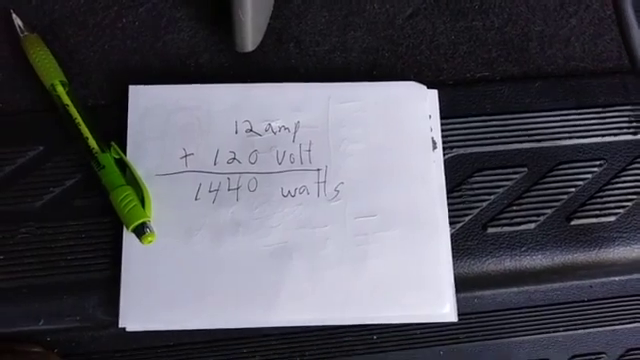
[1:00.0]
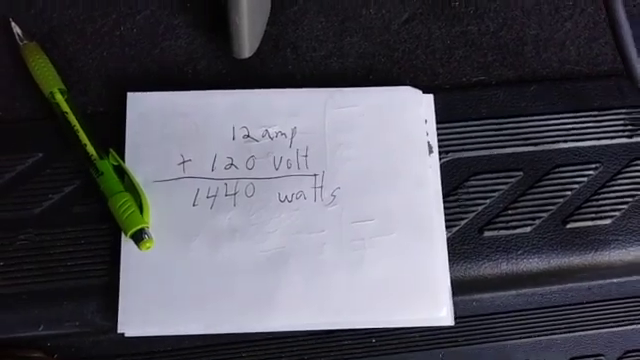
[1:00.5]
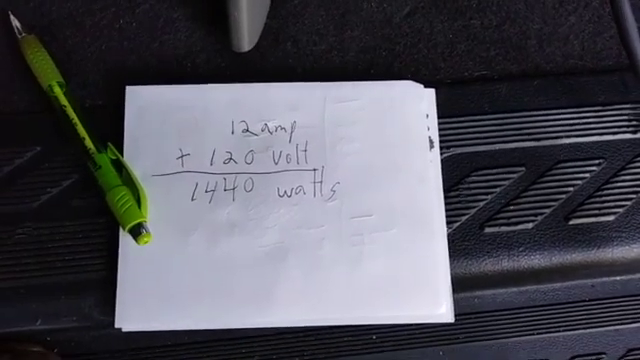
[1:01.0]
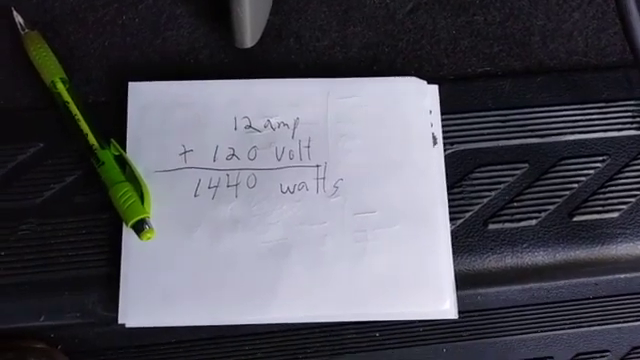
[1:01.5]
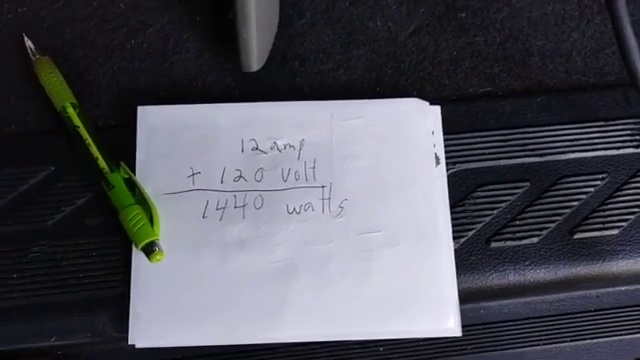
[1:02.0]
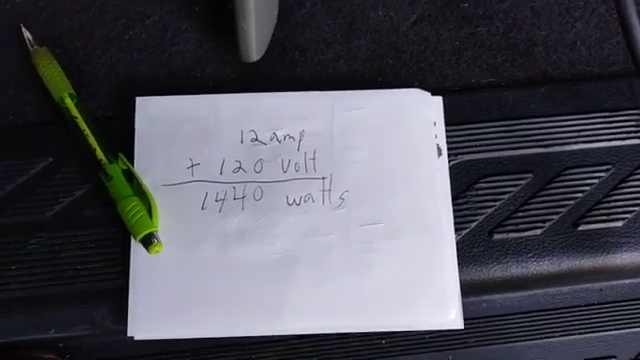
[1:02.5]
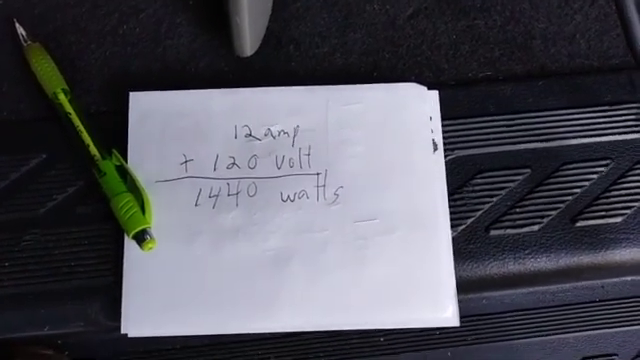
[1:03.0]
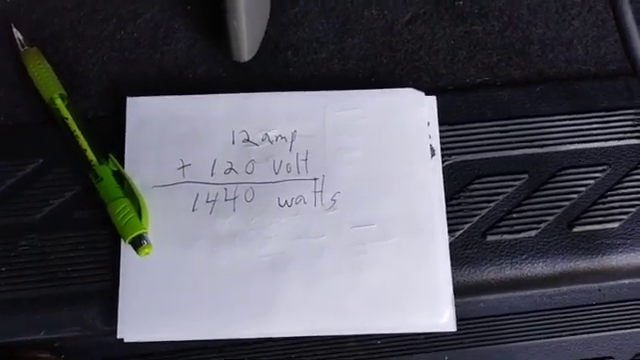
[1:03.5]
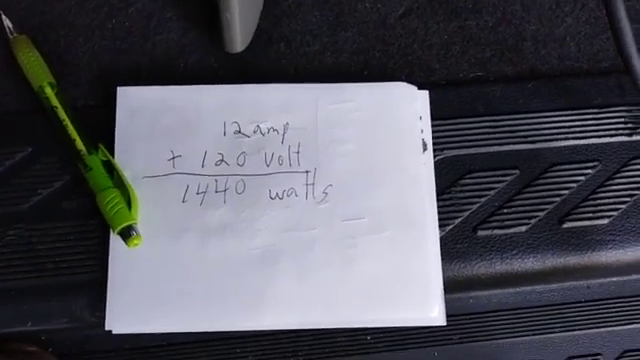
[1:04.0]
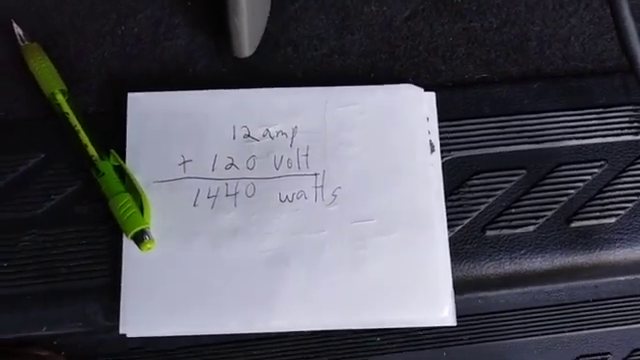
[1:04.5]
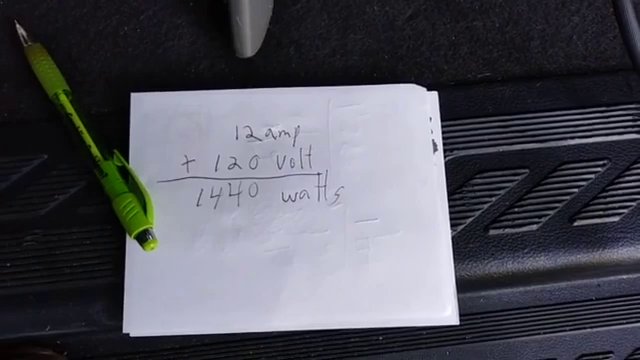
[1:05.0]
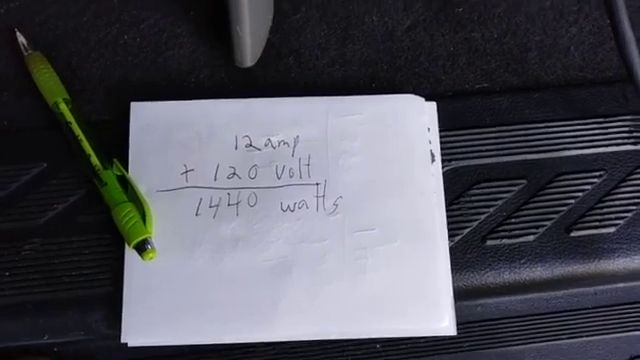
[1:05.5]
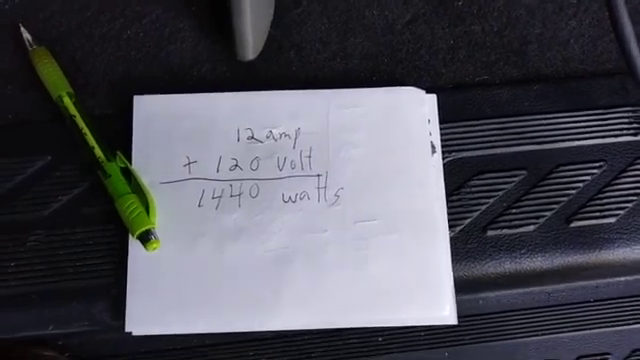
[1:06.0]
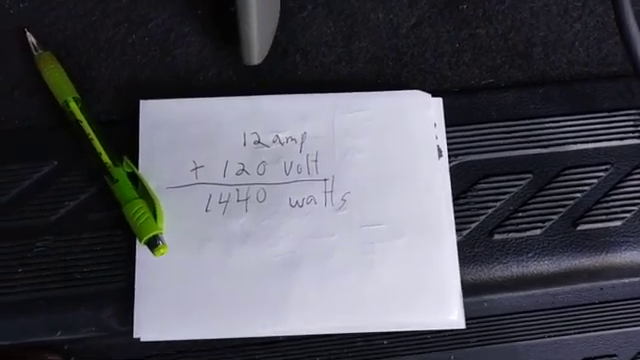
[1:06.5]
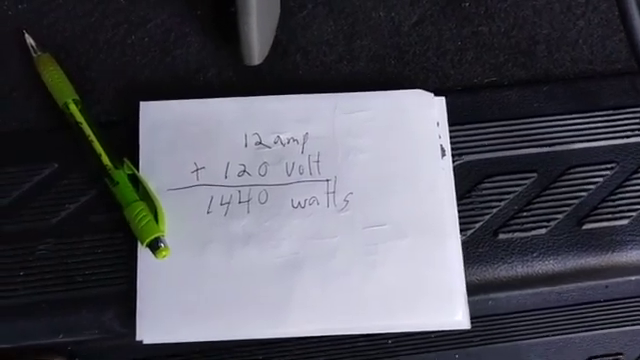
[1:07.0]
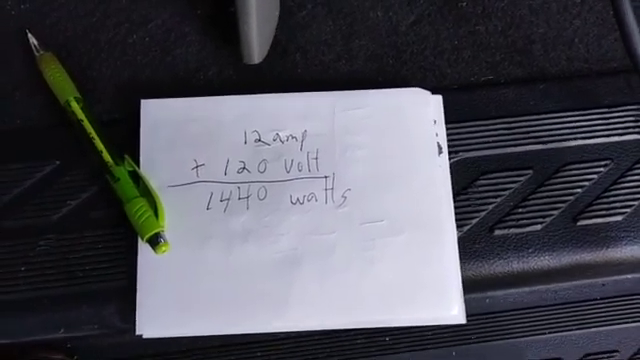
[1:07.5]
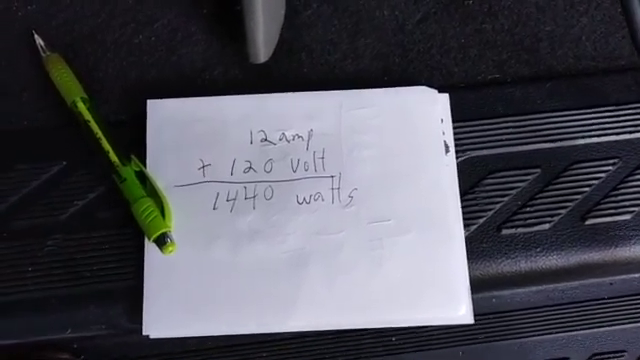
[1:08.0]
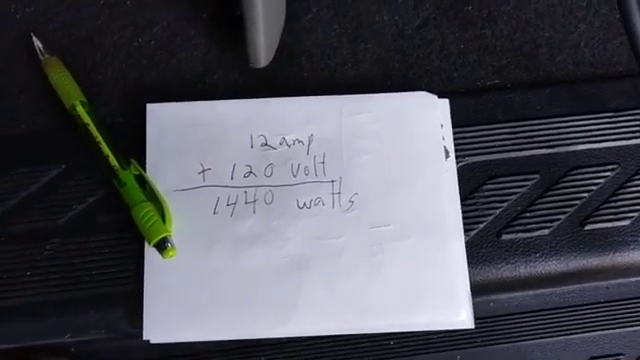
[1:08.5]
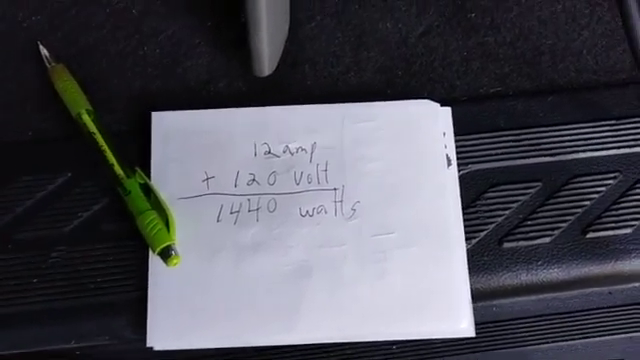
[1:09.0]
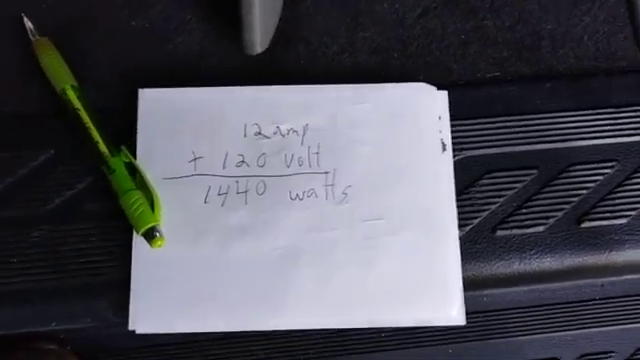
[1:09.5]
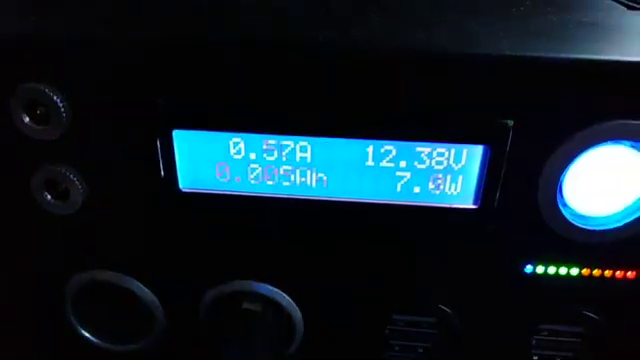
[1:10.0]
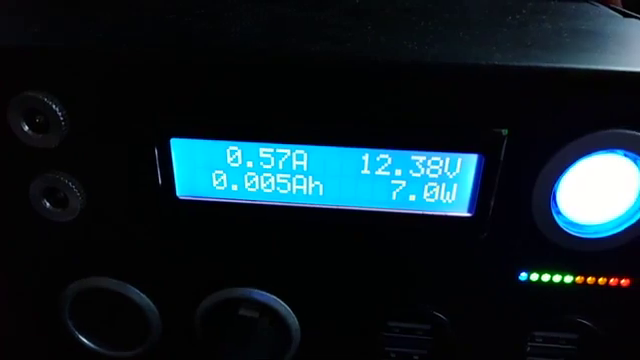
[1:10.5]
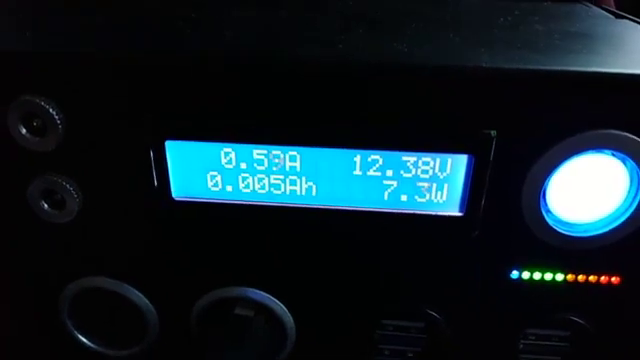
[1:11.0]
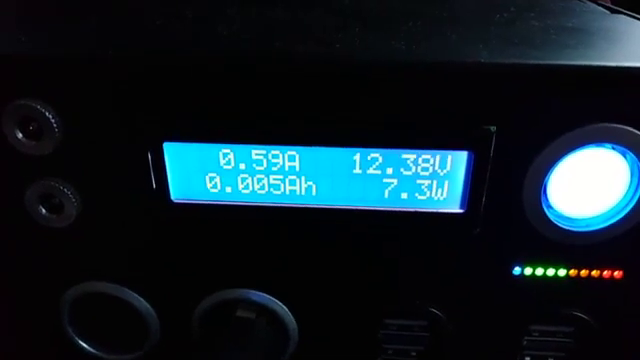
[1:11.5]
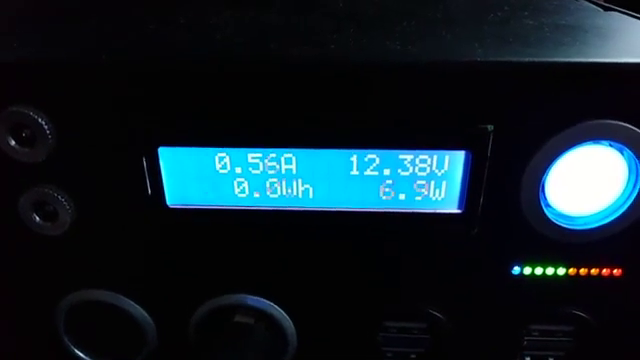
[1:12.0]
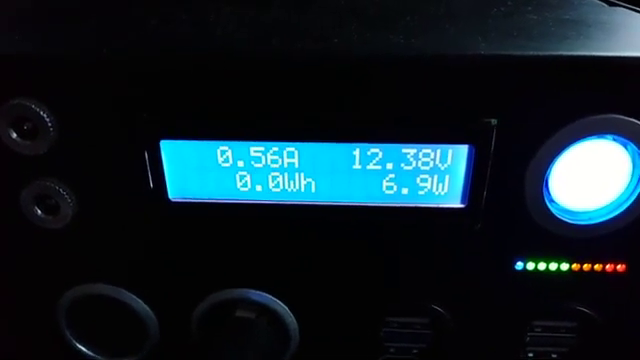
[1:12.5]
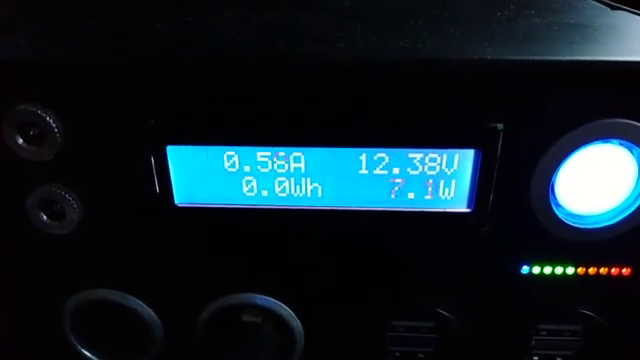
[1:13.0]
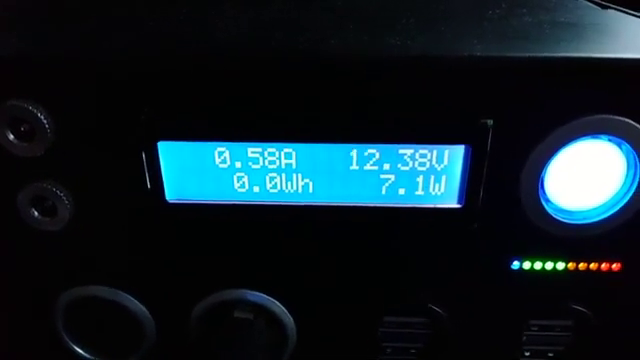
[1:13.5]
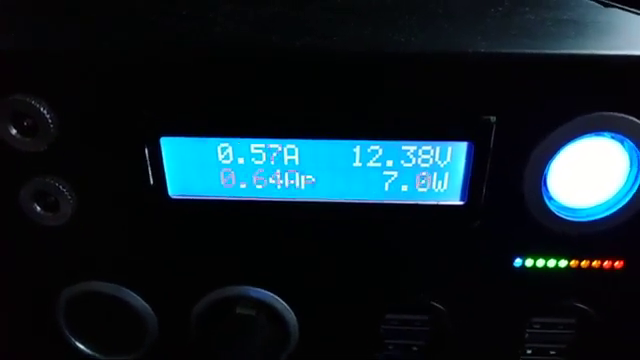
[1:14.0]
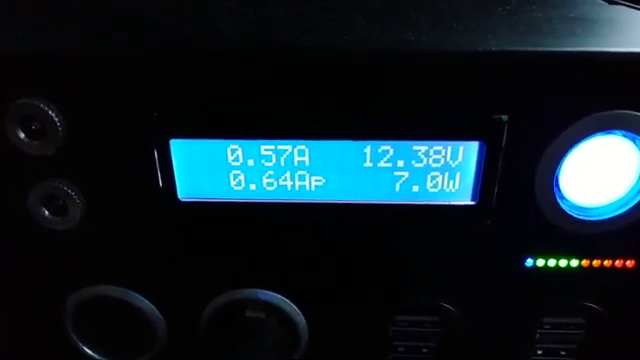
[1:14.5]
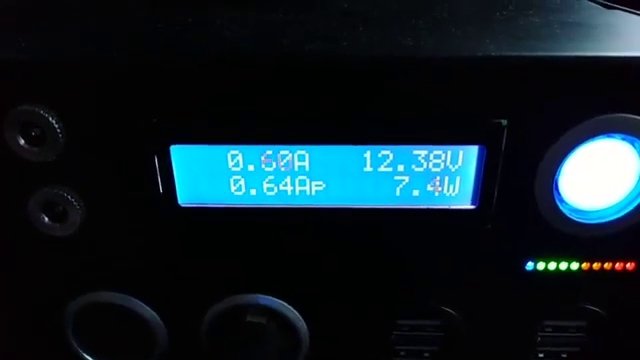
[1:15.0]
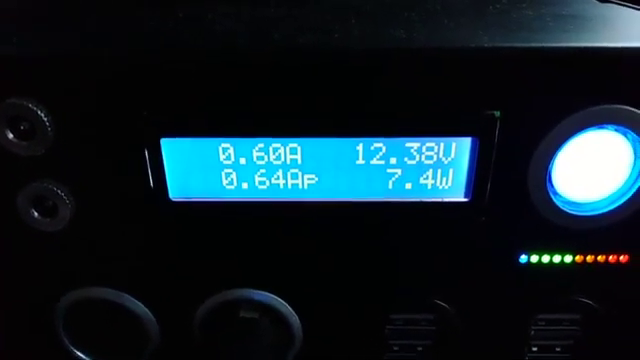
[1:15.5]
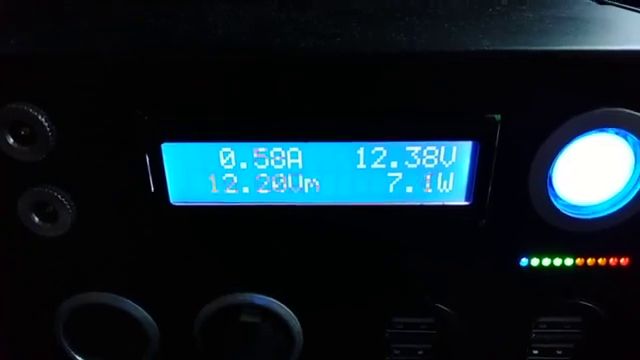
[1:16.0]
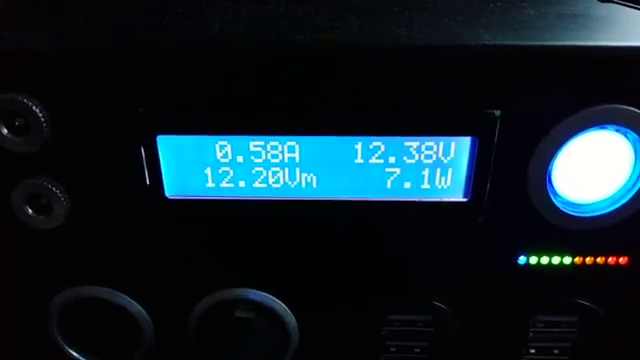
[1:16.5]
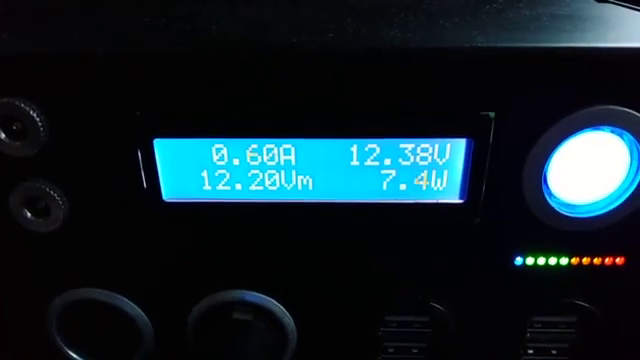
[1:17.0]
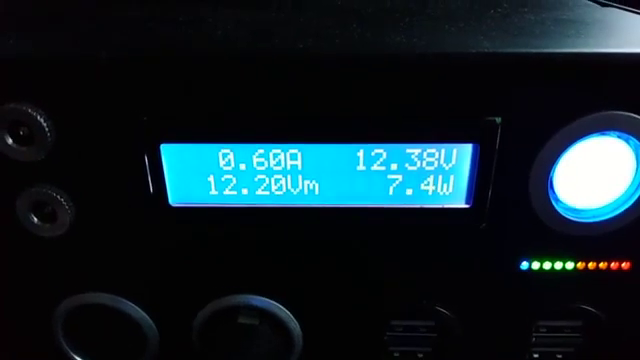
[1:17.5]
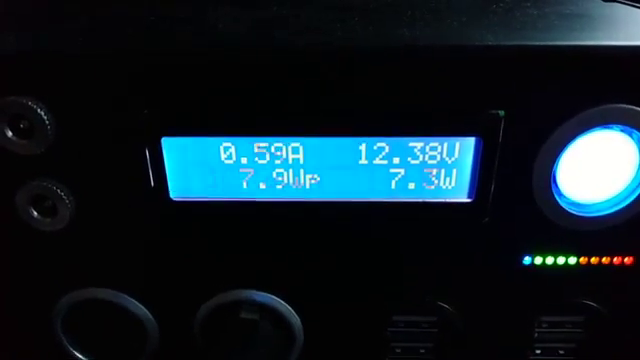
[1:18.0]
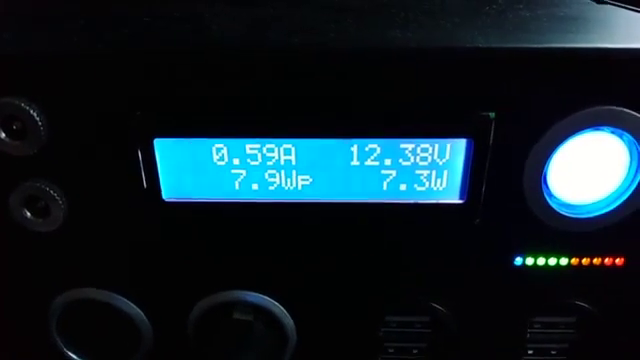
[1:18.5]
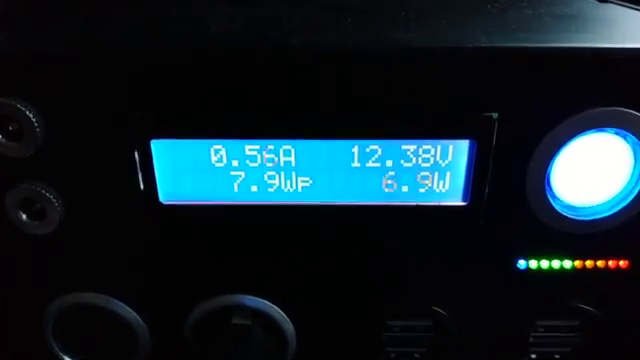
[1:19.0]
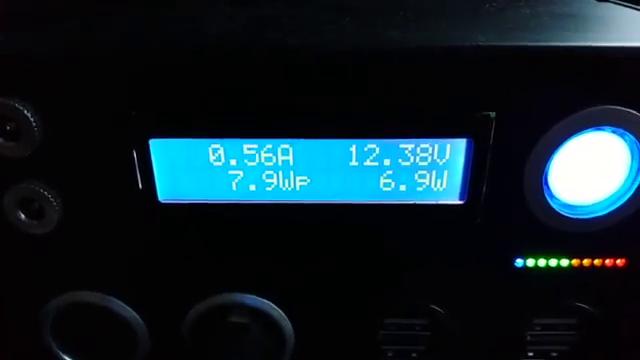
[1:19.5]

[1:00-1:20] The view stays on the van's floorboard, with the floor mat and the white note paper folded into a perfect square; the paper is probably rectangular. At the top it reads "12 amp", below that "+ 120 volt", then a line, and below that "1440 watts"; the rest of the paper is blank. The yellowish-green pen lies horizontally, with the push button and part of the handle touching the paper and the rest on the floor. The scene then changes to what looks like a digital interface with 10 small circular lights in blue, green, orange and yellow, and above that a circle like a porthole with bright light coming out of it. The interface screen is green with white electronic characters reading "0.56A", below that "0.0WH", and in the left-hand corner "12.38V".